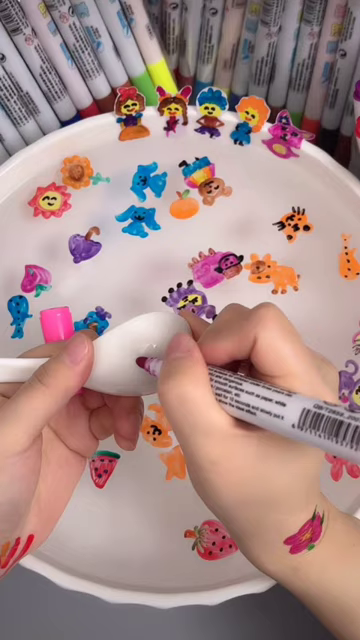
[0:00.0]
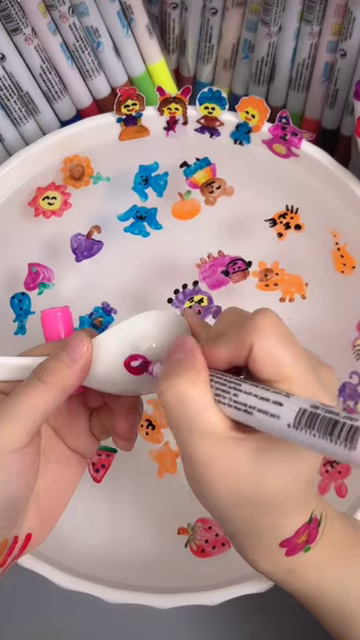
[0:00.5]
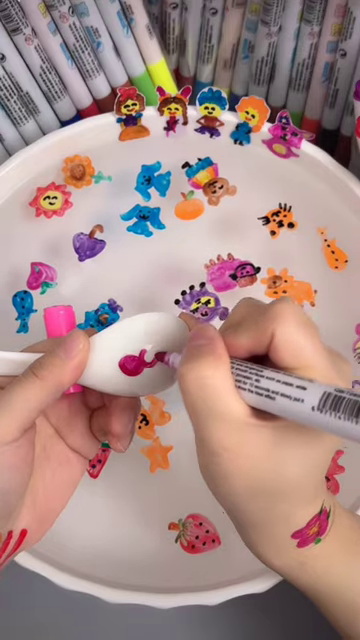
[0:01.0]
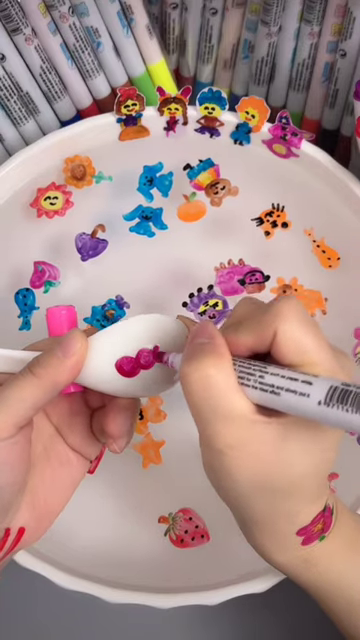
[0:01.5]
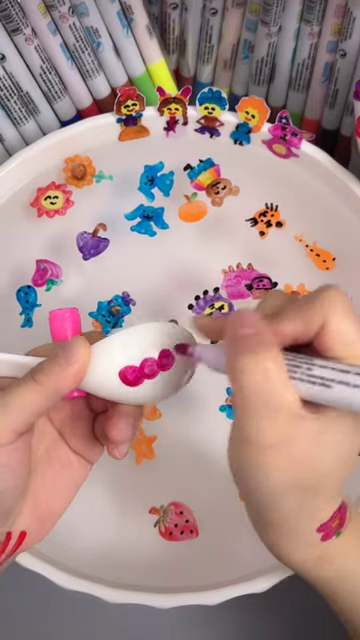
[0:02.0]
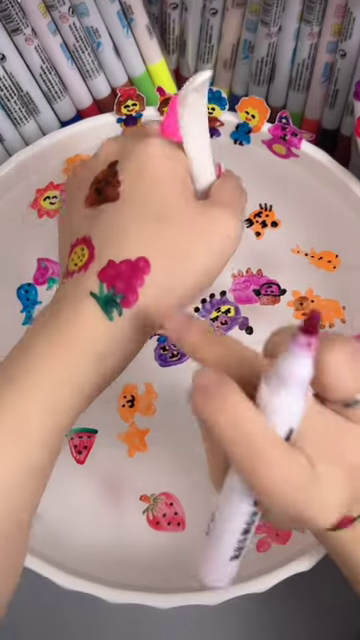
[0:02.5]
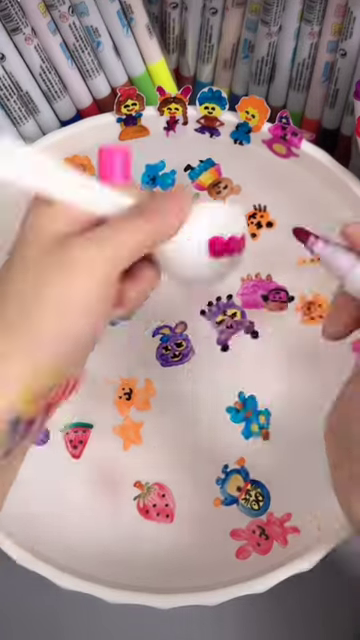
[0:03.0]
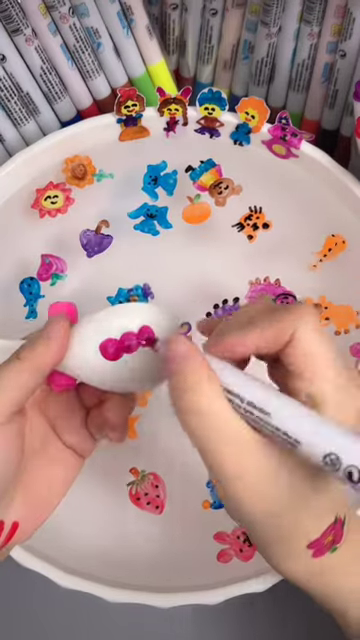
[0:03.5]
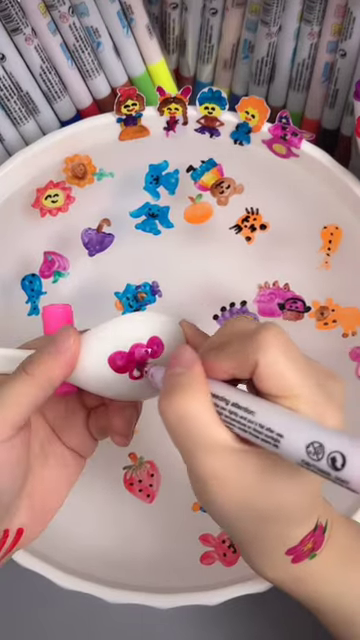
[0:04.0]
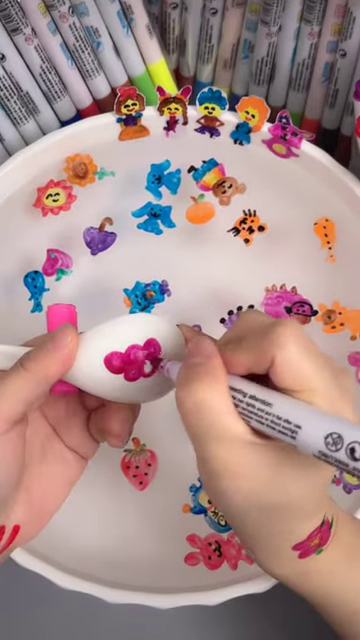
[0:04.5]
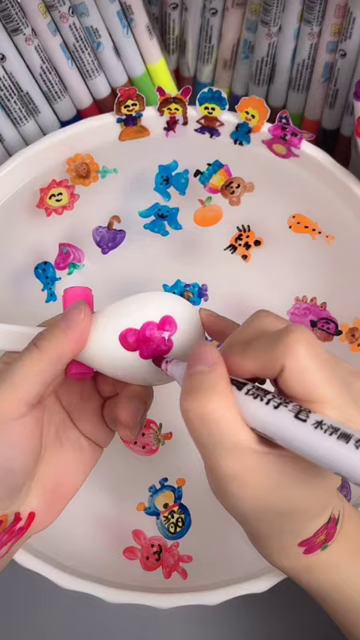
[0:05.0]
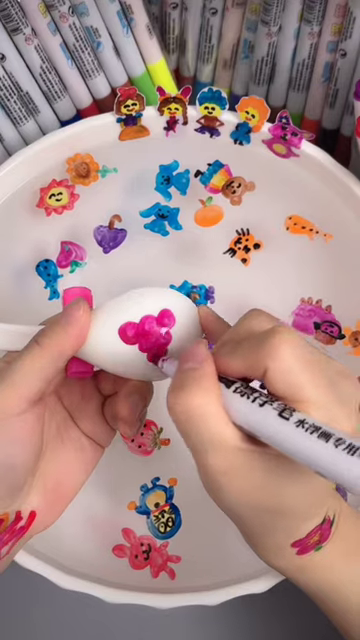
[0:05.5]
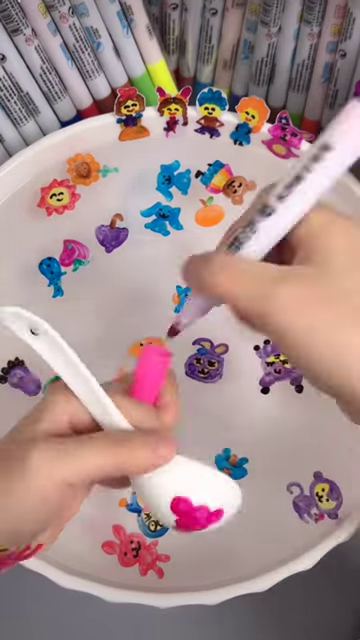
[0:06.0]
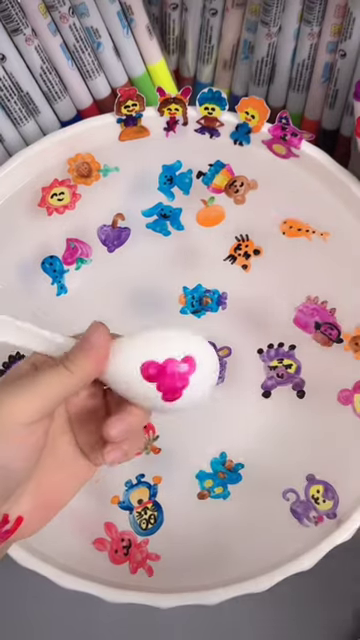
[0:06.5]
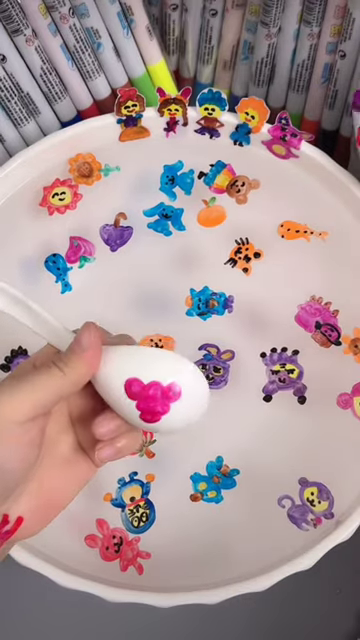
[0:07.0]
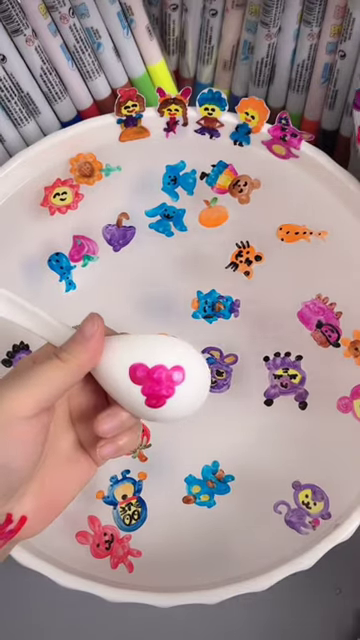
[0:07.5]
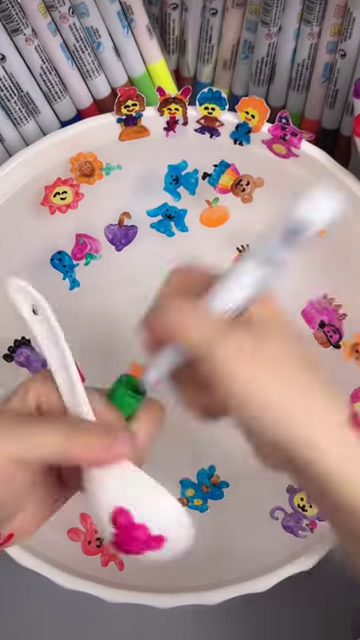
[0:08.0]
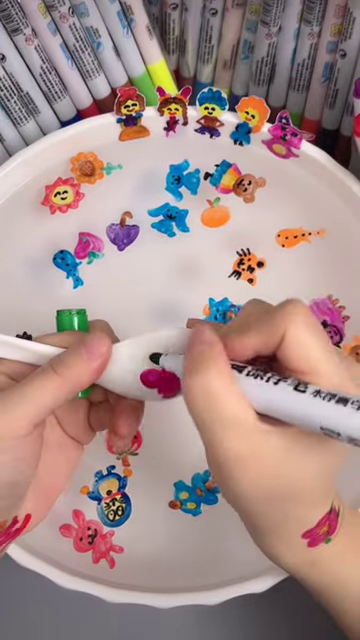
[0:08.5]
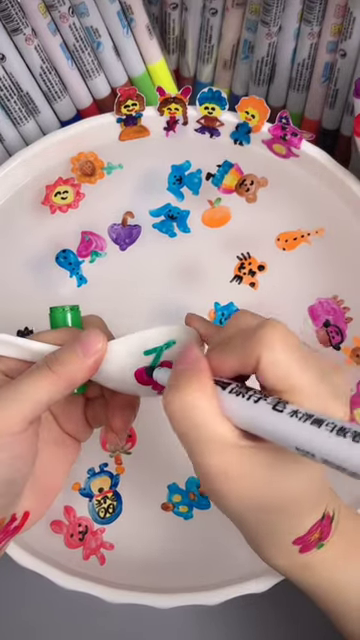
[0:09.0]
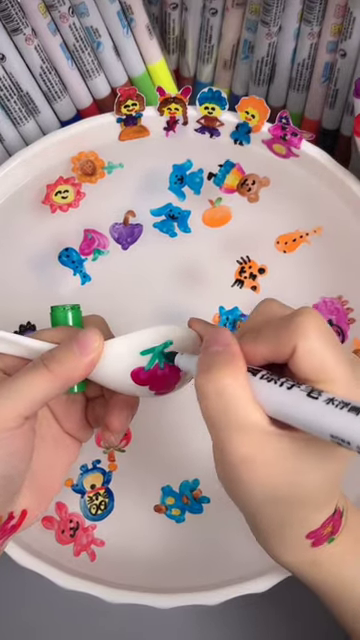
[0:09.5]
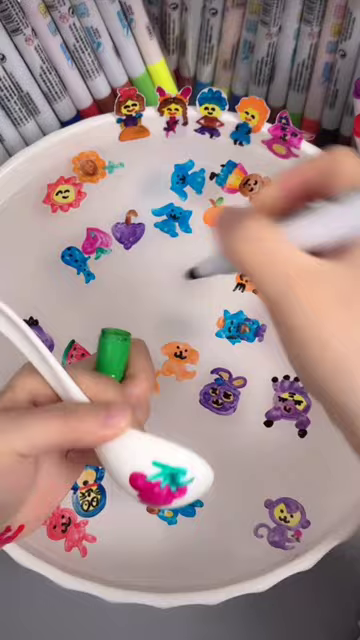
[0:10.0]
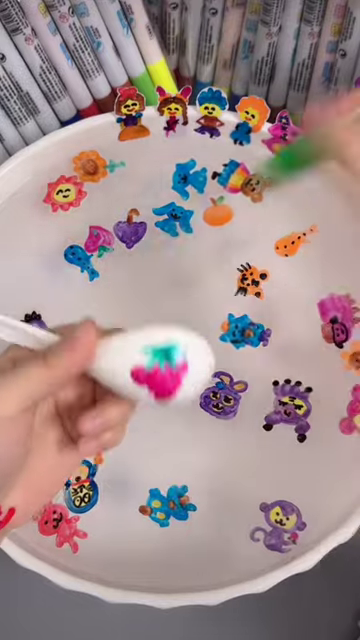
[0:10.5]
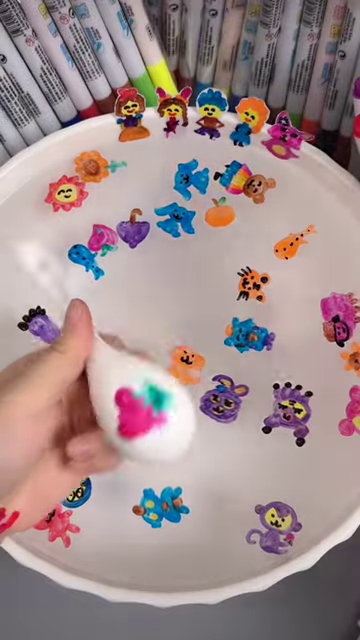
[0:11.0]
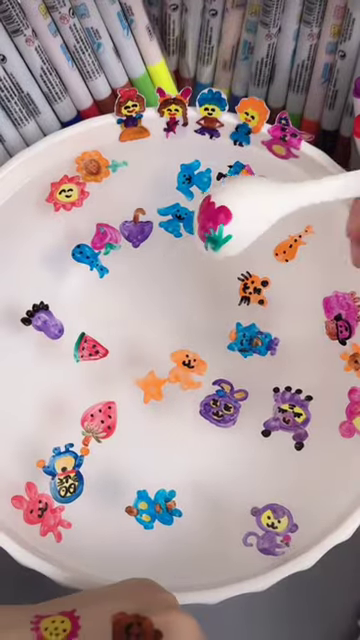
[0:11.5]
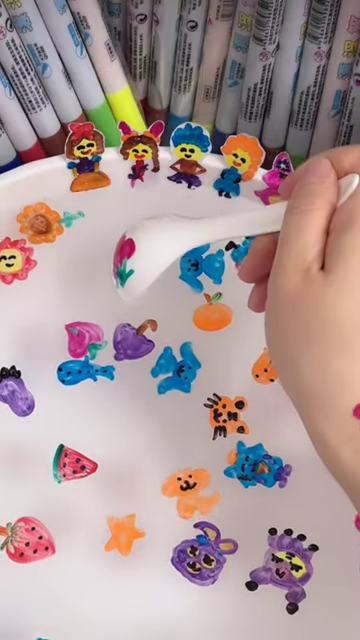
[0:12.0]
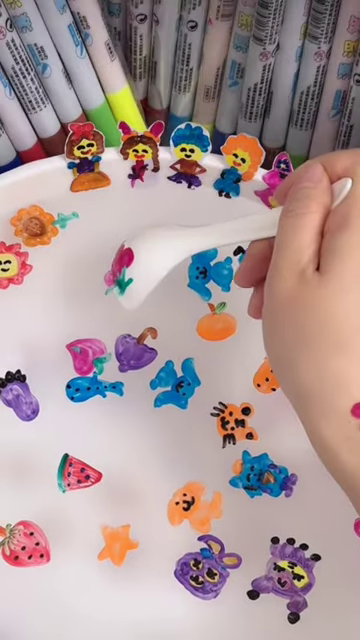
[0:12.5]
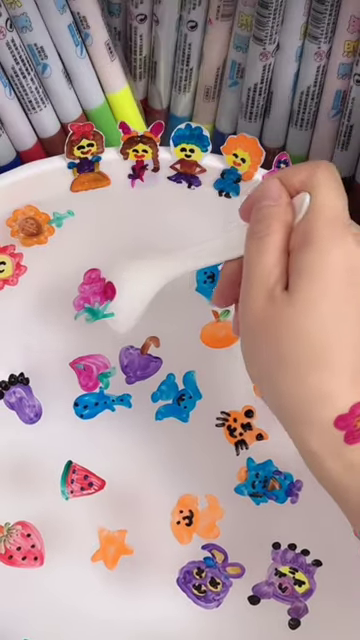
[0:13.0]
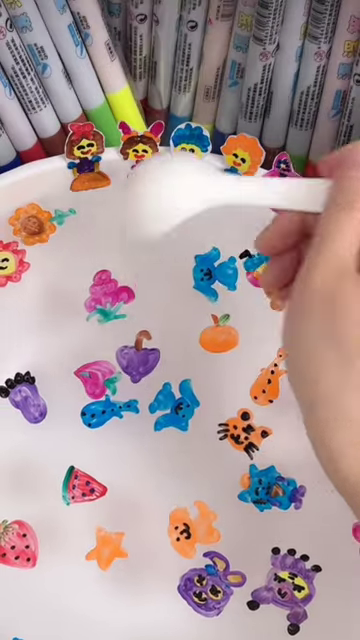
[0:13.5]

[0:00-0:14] Someone uses a pen to make different drawings on what looks like a spoon, which seems to be above water in a plastic bowl. A bunch of different drawings float on the water. When the person puts the spoon in the water, the drawing they have made is added to the water as well. The pen seems to be a special sort of marker that allows the drawings to float on the water. On the side of the bowl near the water is a group of little people drawings; they look like they are sitting above the water, unlike the rest of the drawings, which float inside the water. The person has drawn a wide variety of things: fruits, flowers, and animals, including monkeys, rabbits, cats, dogs, strawberries, watermelon, and grape. What seems to be a sunshine floats on the water, along with a bear. Some colored markers are in the back and seem to be of the same brand as the one the person is using.